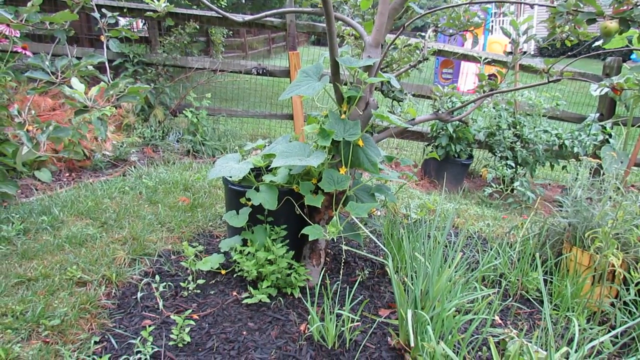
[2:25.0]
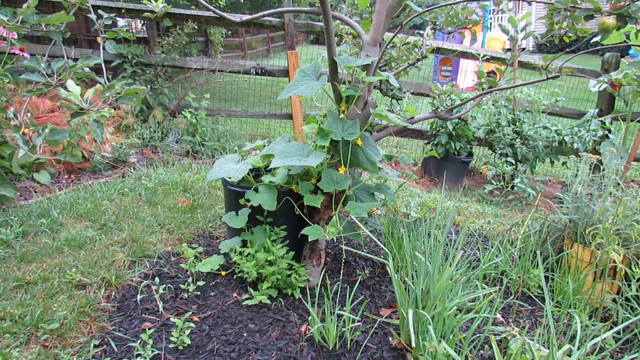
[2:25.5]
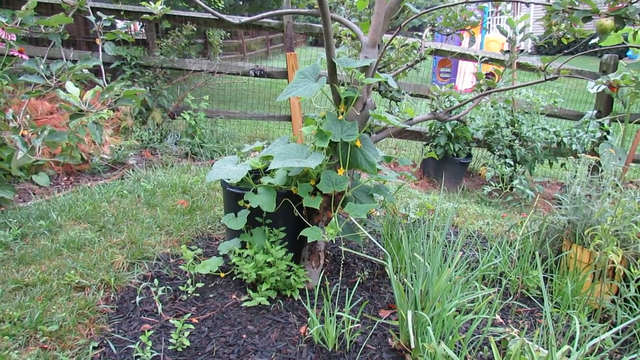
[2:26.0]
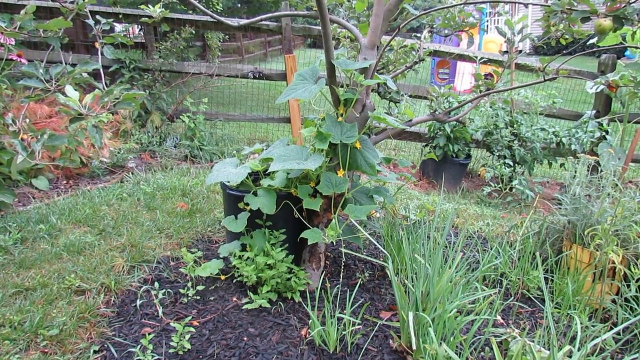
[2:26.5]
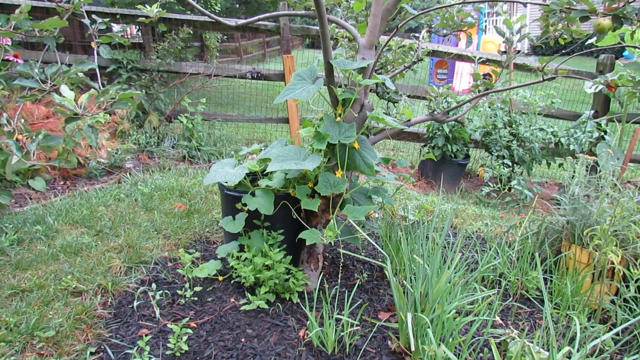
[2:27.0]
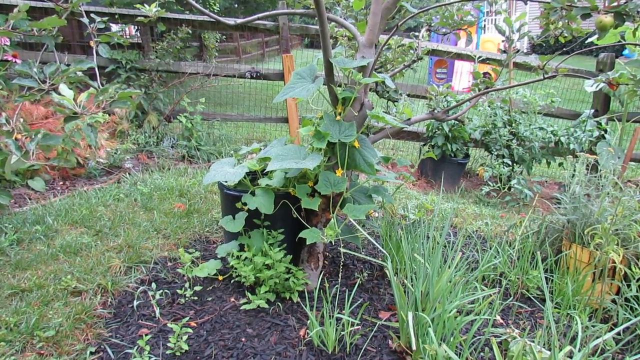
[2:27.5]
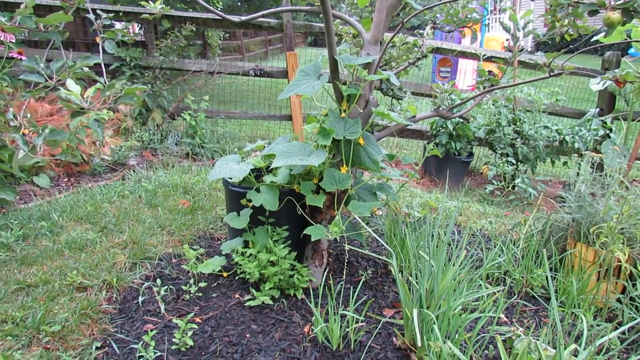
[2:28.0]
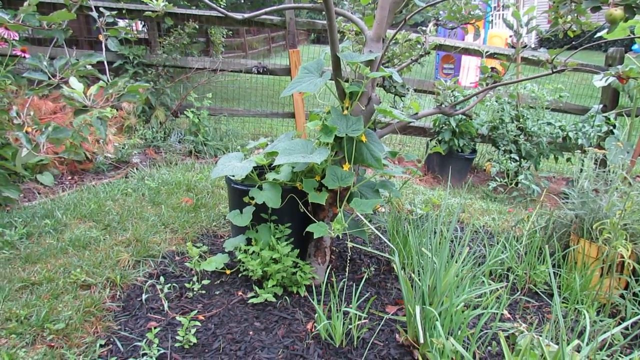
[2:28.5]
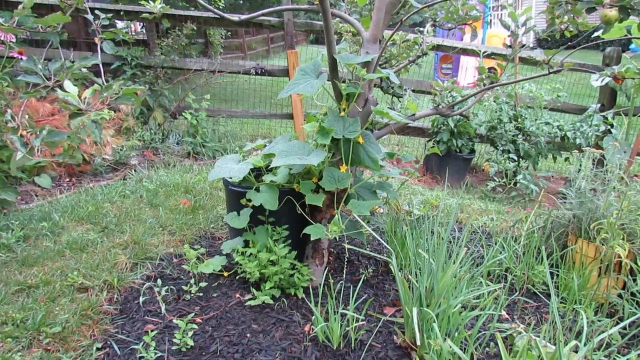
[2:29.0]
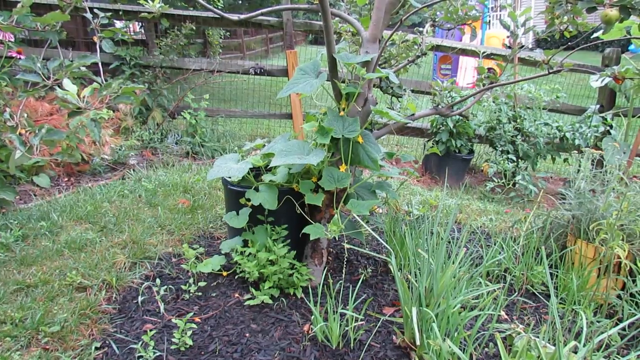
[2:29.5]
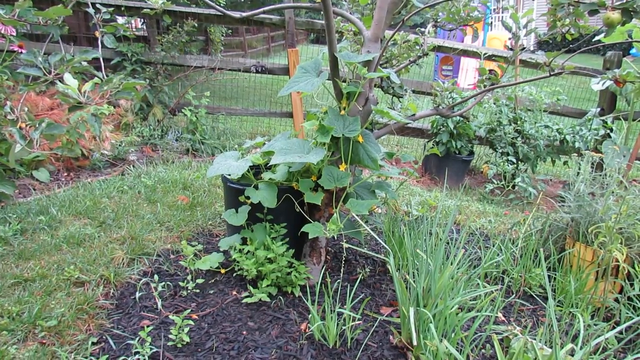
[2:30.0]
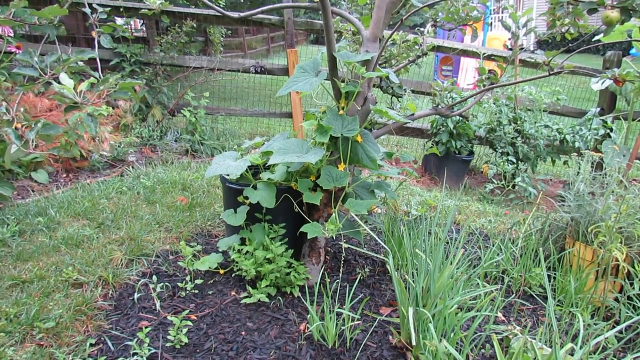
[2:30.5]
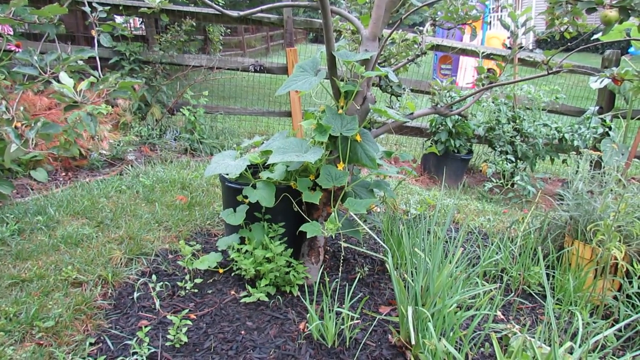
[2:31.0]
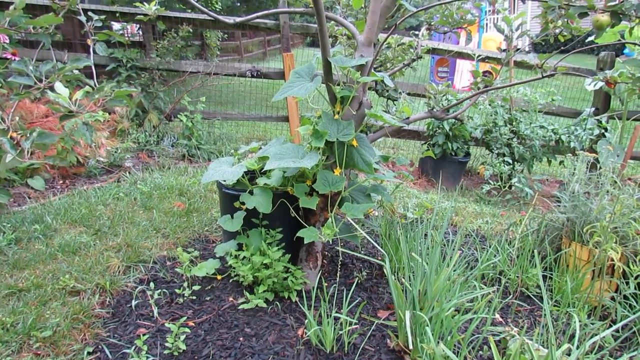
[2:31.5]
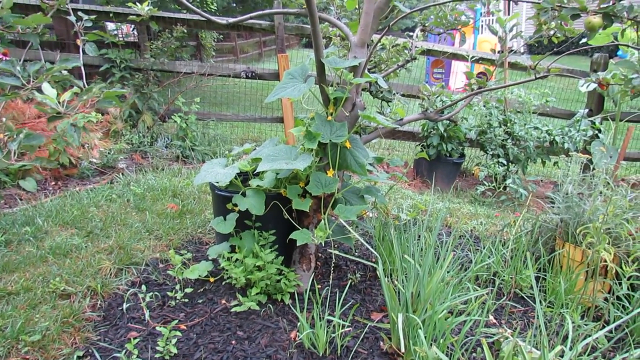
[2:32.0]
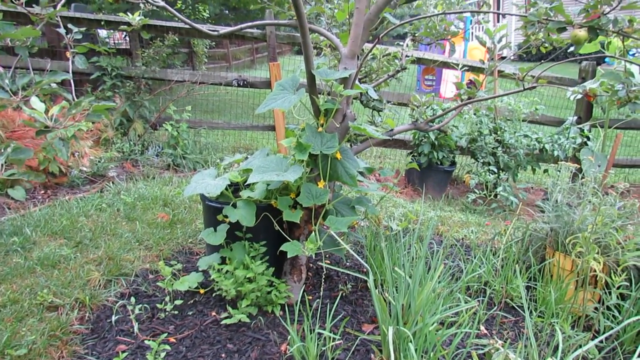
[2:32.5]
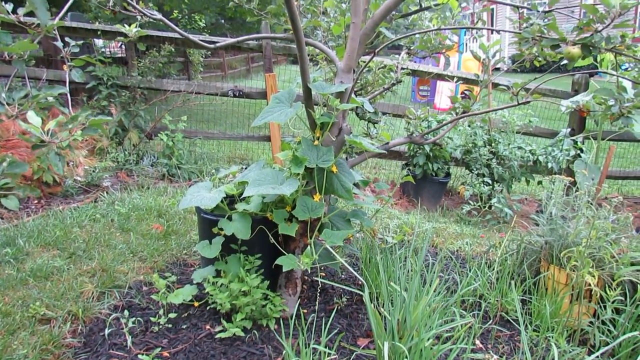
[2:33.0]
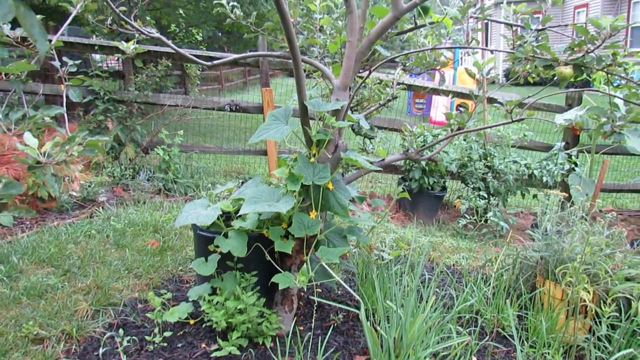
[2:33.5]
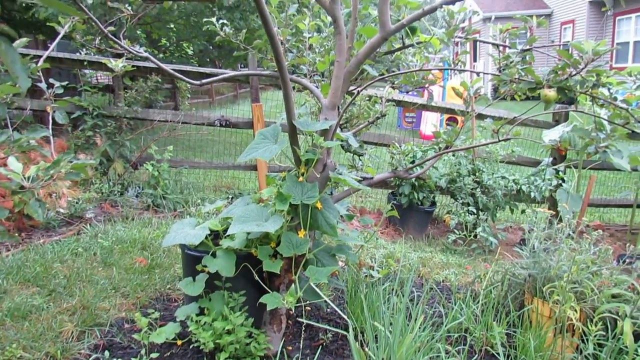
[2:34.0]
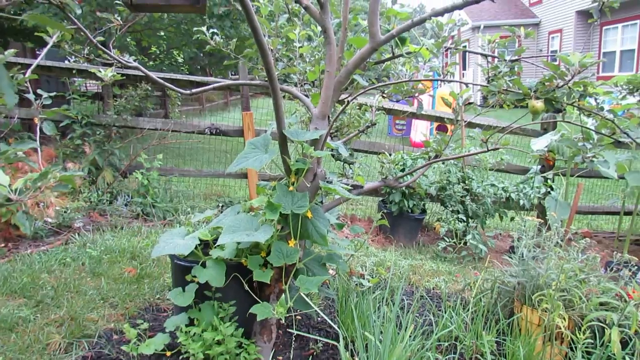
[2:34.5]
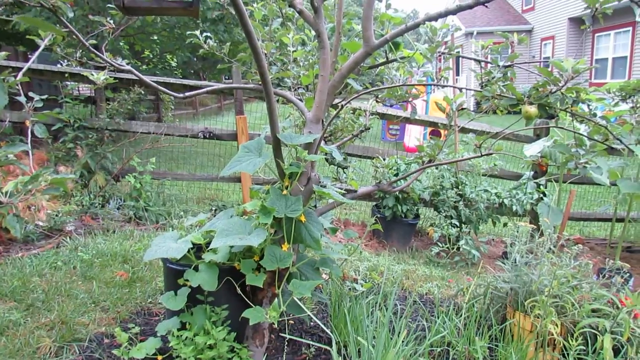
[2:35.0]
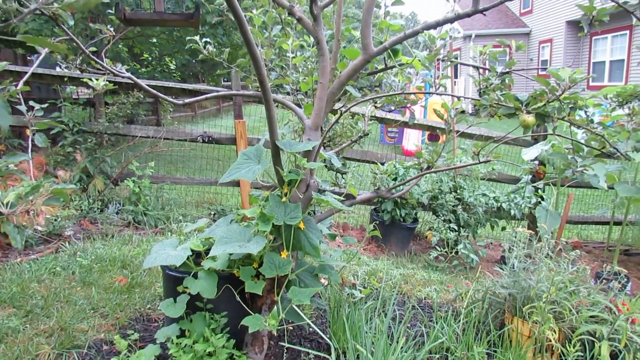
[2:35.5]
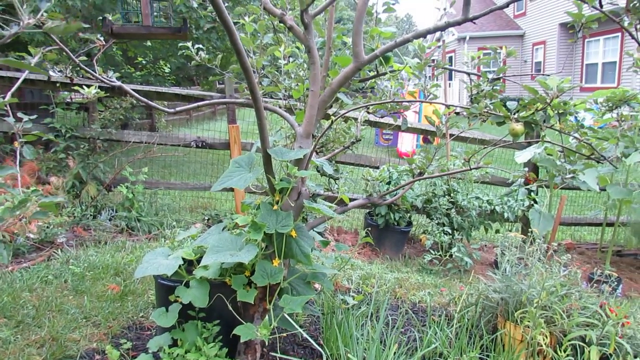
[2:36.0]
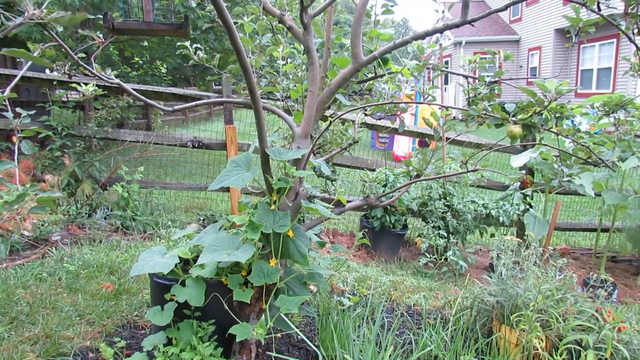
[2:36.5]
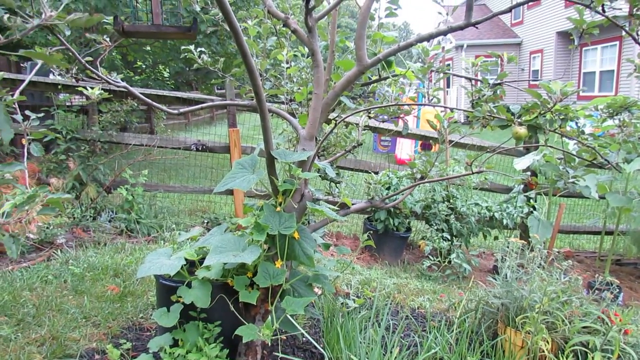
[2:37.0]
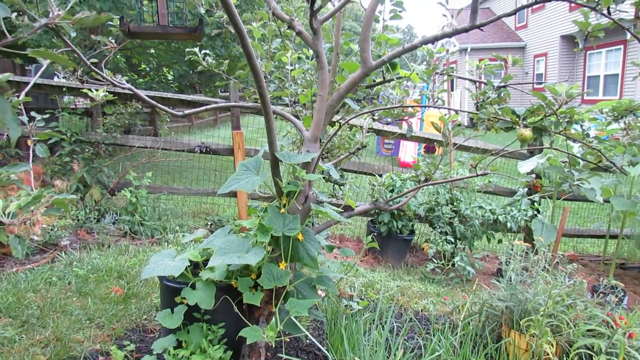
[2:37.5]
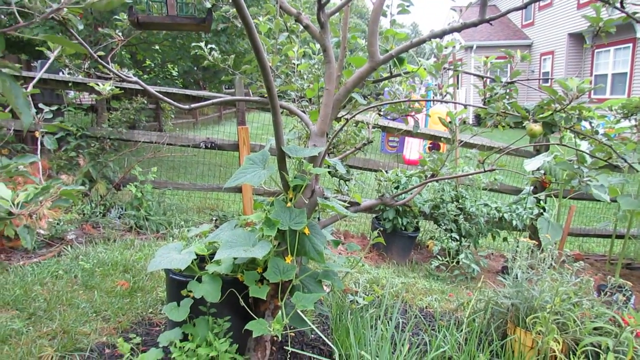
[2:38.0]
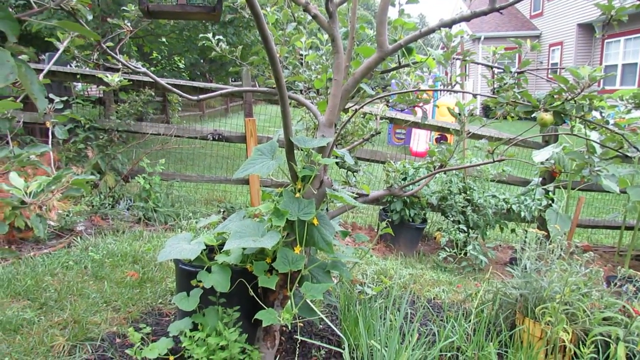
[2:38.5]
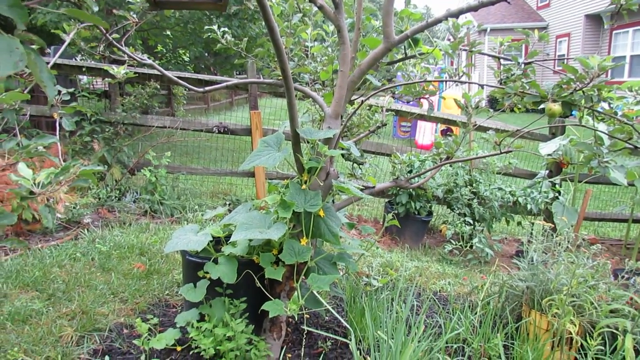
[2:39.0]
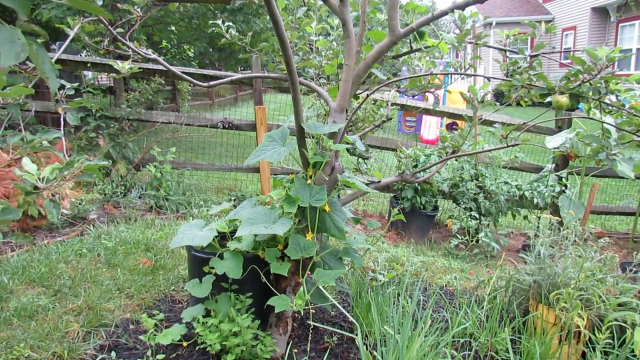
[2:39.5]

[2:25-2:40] The shot shows the tree that looks like the pear tree, with what is apparently a cucumber plant with green leaves and small yellow flowers growing up along it. A black potted plant is to the left of the tree, along with foliage and greenery growing from the ground. There seems to be dirt with wood chips covering it, a covering that looks dark gray or maybe black over the ground. Lots of wild-growing ferns and plants give the yard and garden a natural, not overly manicured look. Another black potted plant is in the background to the right. A natural-looking wooden fence separates the two houses; the neighbor's house seems white or maybe light gray, with red trim around the windows. There is also a plastic play structure in the neighbor's yard with a slide and some climbing tunnels.